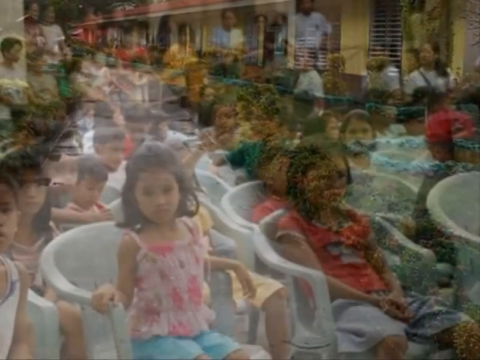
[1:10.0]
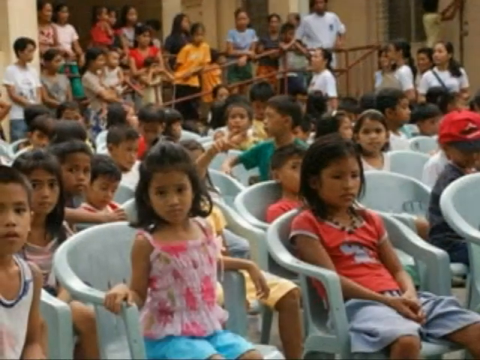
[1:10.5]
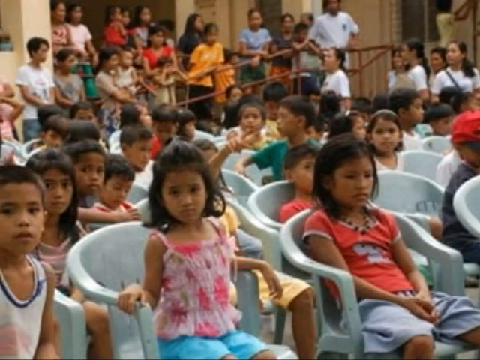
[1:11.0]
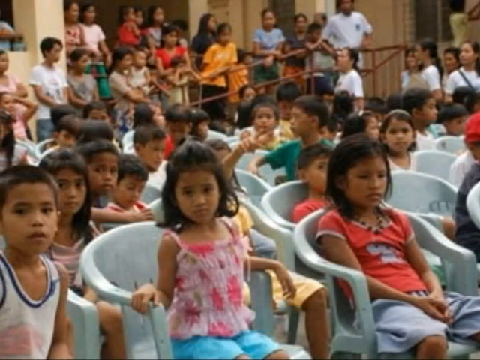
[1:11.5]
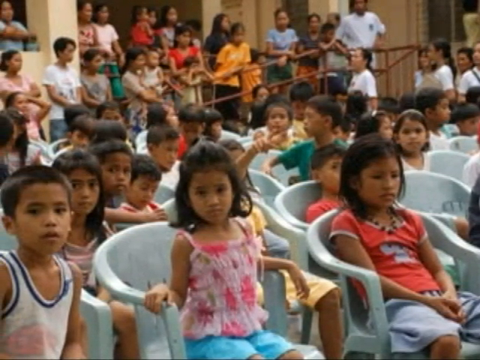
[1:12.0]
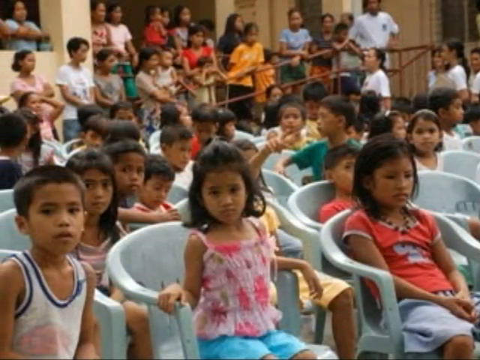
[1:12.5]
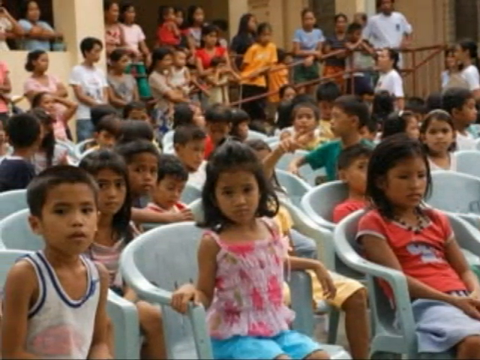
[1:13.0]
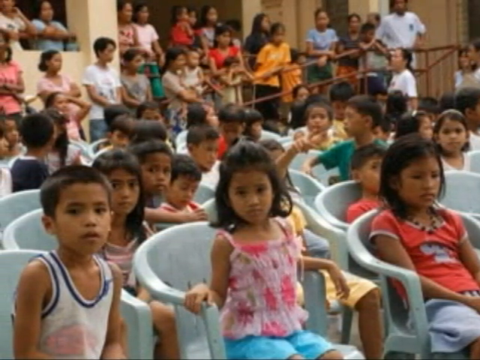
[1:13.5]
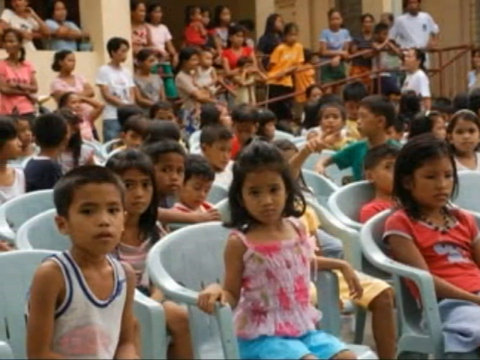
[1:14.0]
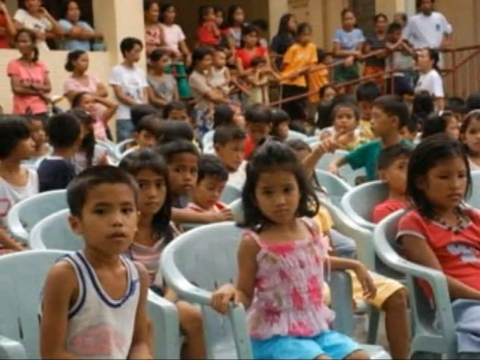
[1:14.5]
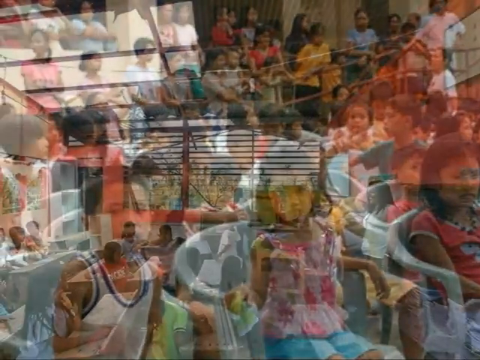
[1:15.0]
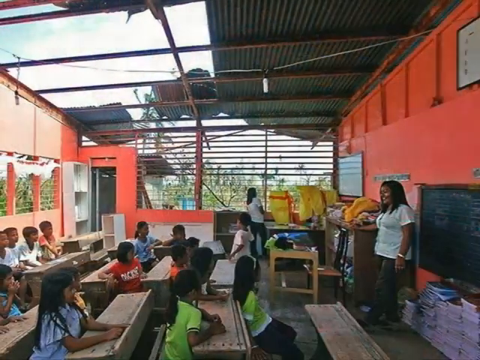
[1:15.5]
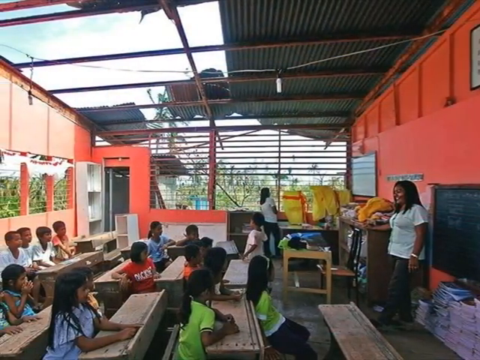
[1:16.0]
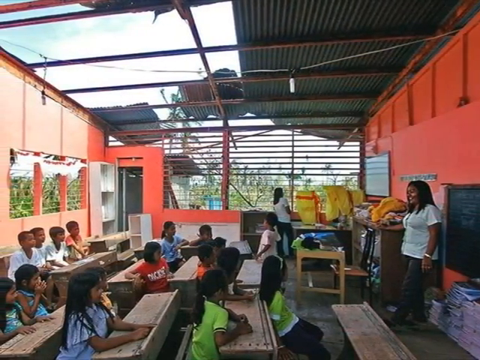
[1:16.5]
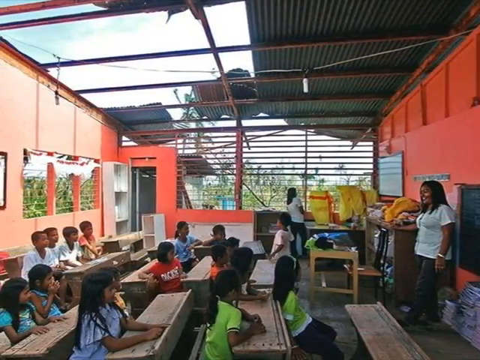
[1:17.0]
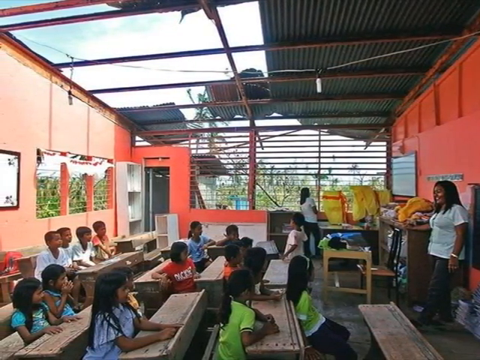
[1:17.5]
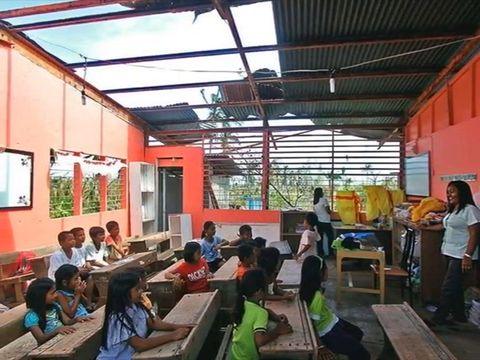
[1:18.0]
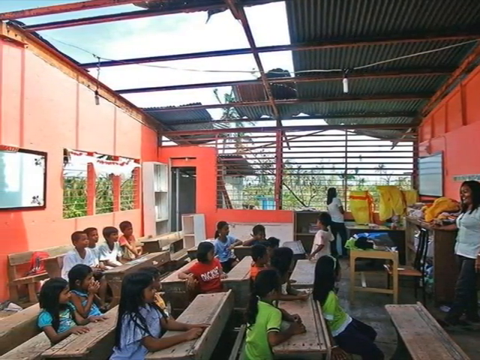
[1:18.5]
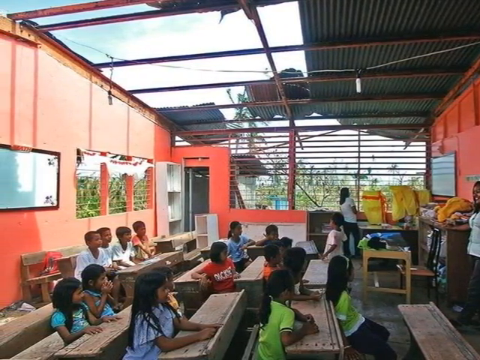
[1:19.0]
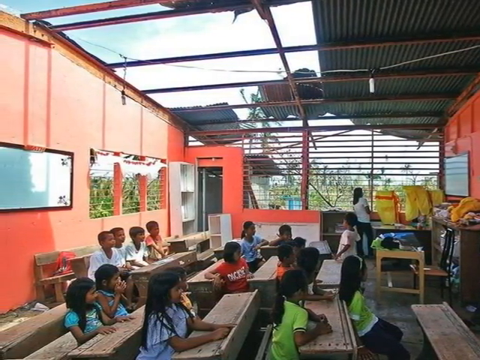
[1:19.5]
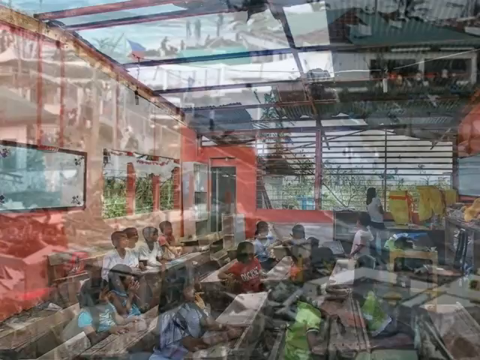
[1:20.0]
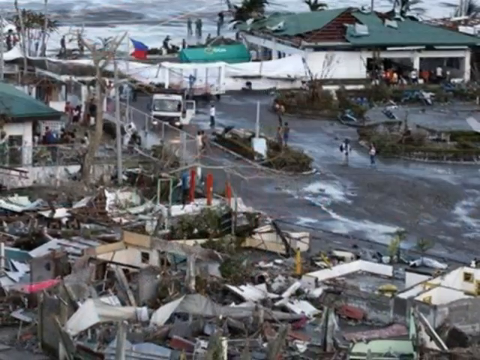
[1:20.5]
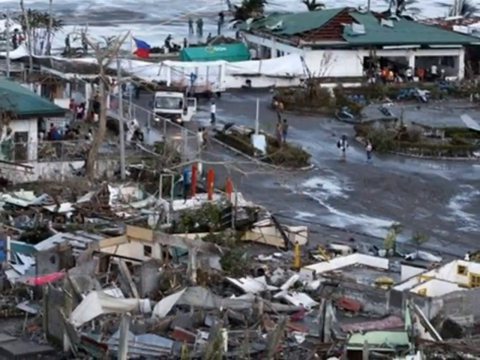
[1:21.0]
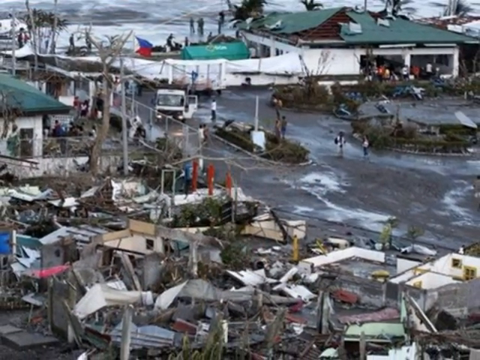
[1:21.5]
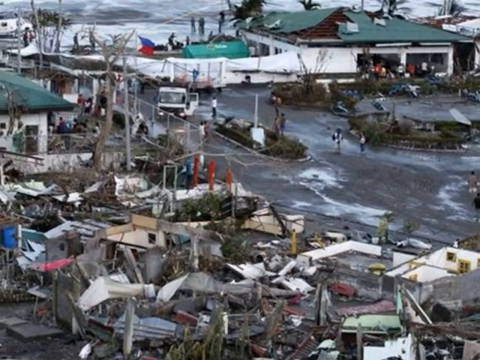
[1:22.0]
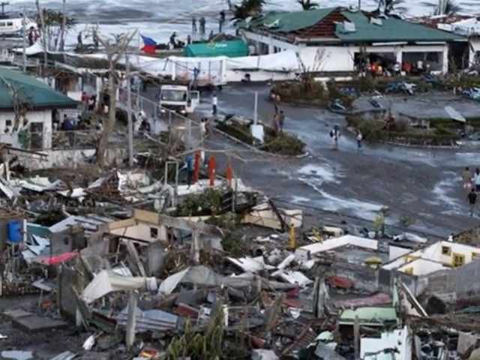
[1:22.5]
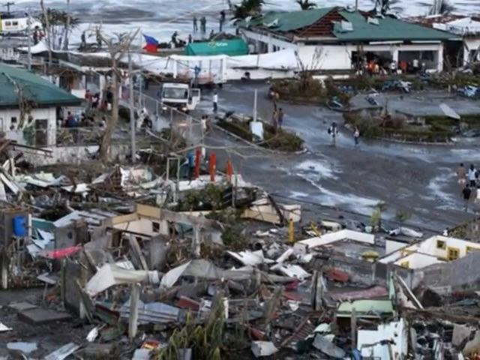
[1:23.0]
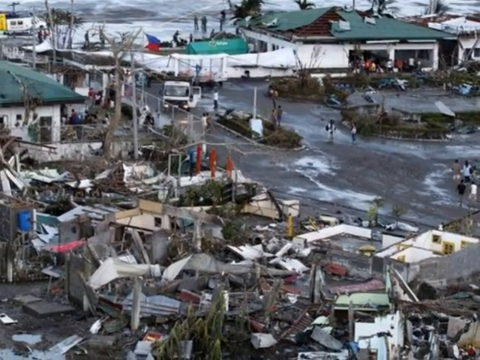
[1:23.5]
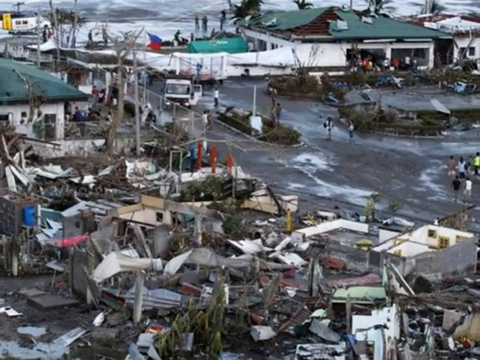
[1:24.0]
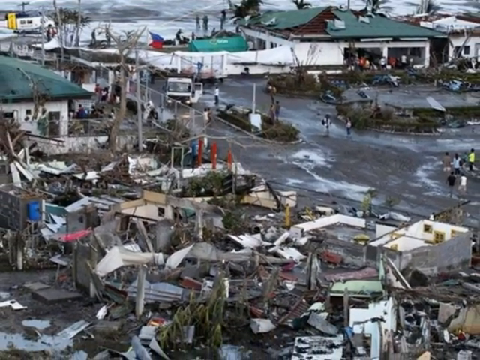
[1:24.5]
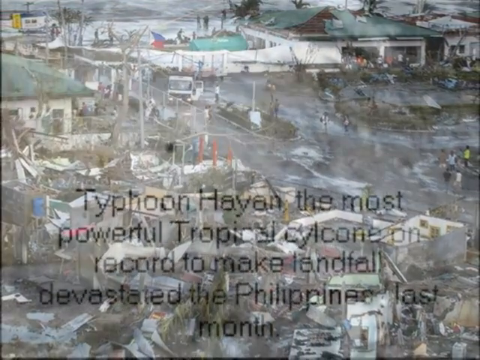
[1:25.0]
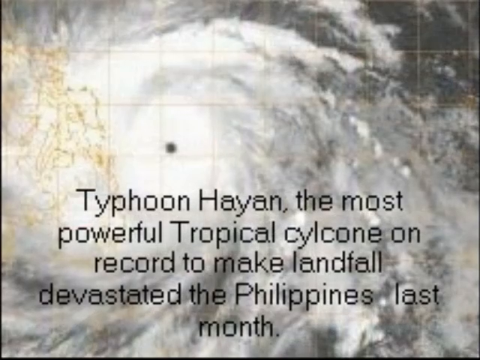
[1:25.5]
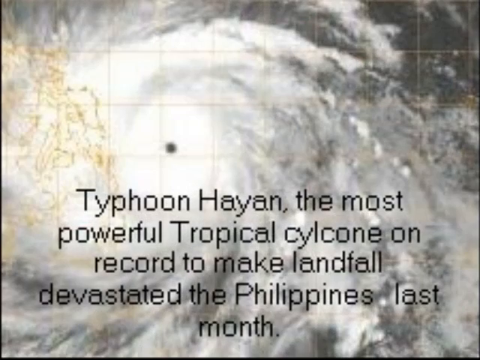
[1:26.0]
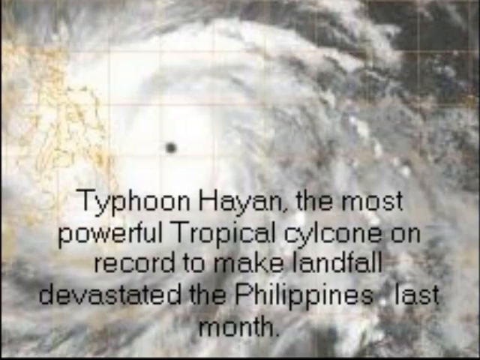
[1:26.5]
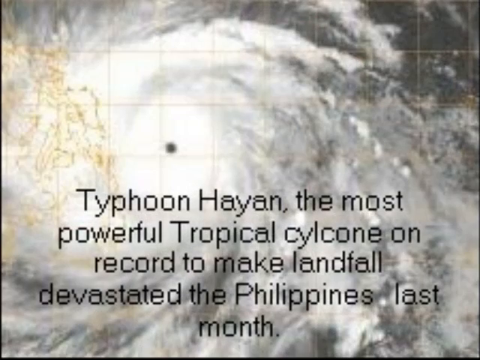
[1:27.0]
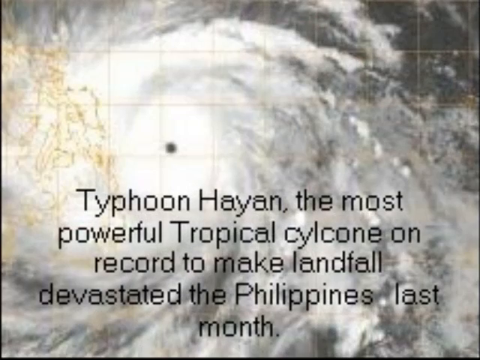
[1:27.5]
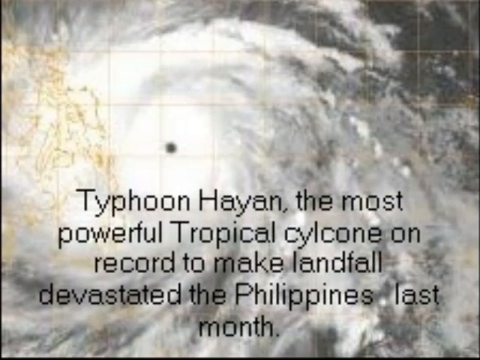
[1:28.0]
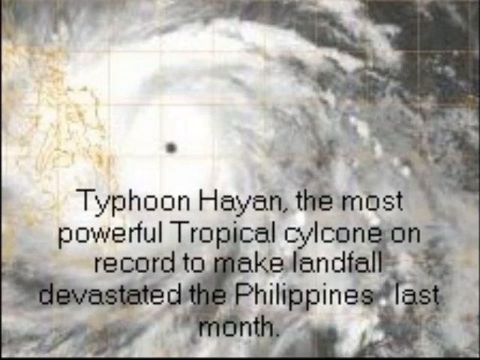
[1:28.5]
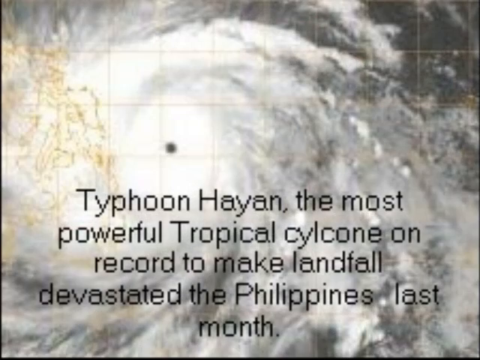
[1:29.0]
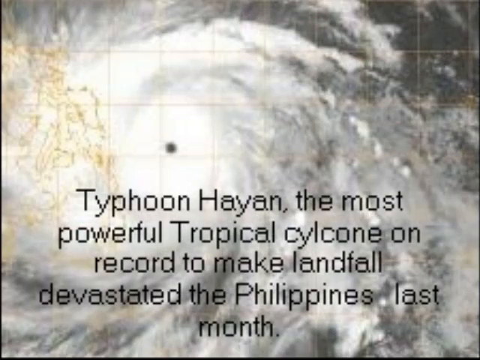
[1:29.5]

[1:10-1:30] Dozens of children and several adults are inside an auditorium. Many of the adults are standing on a ramp in the background, and the children are all seated in blue plastic chairs. The video then transitions to the inside of a classroom with a damaged roof and damaged siding; the siding has been removed almost entirely from one side of the classroom and half of the roof is missing. About a dozen children are visible, all seated at long wooden desks. There are two teachers: one standing at the front near a chalkboard, smiling as she talks to the students, and another standing along the wall with the damaged siding, peering outside. Large yellow bags are on a desk at the far end of the building next to a white board. Bookshelves and cases are leaning against the back wall, and torn fabric is visible along the siding.